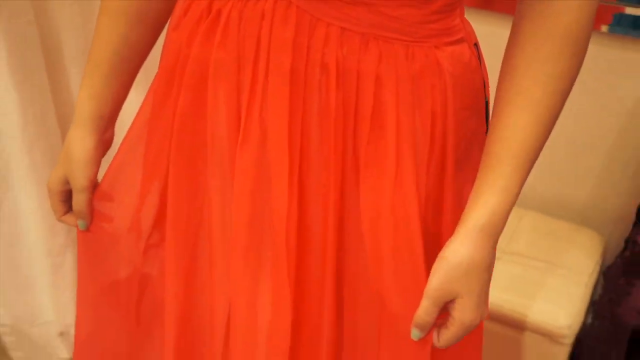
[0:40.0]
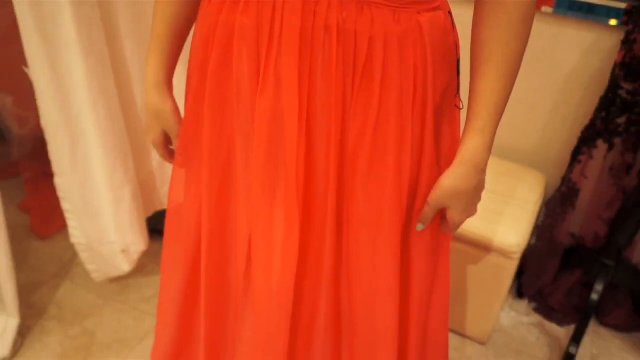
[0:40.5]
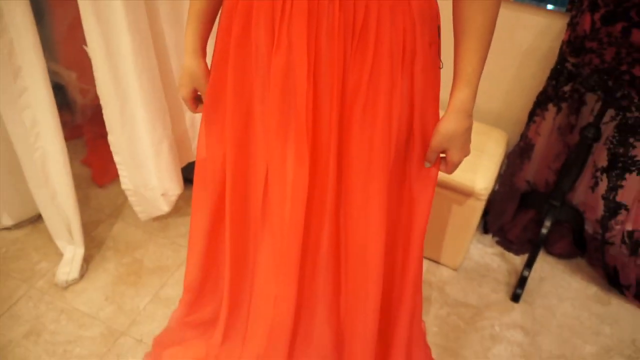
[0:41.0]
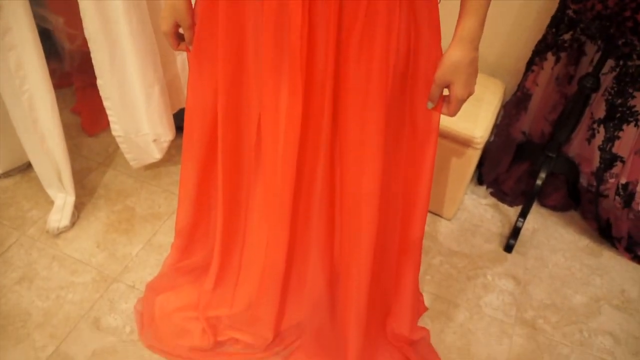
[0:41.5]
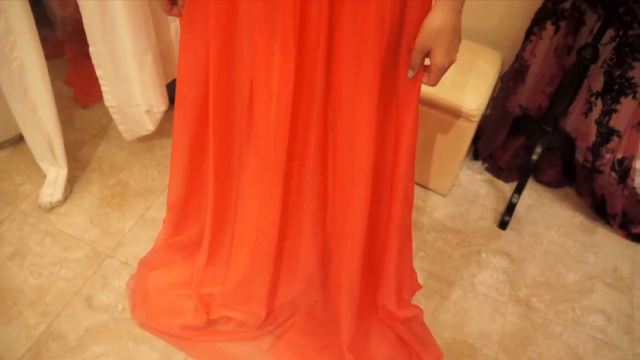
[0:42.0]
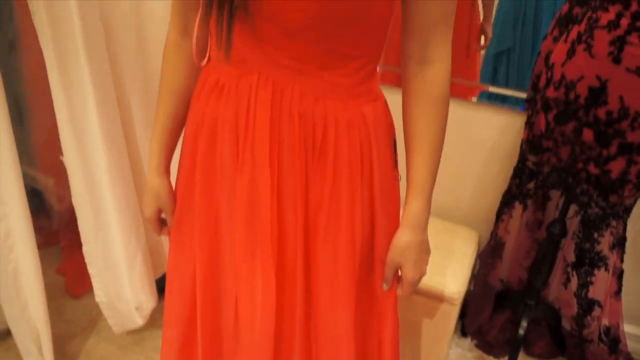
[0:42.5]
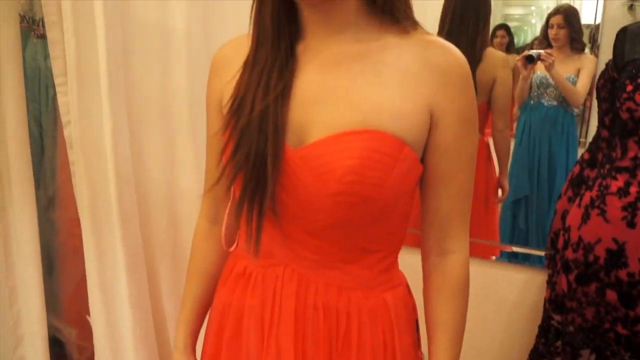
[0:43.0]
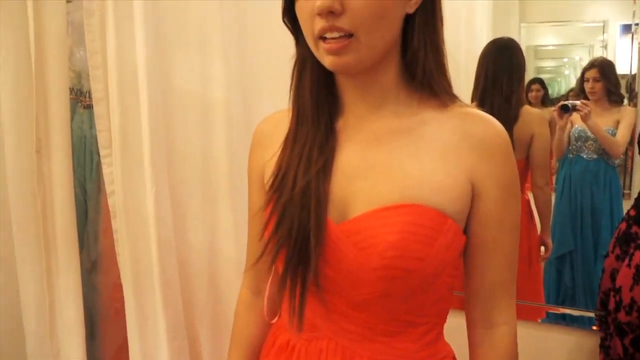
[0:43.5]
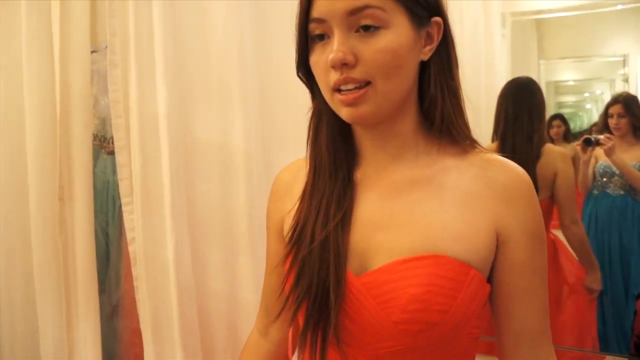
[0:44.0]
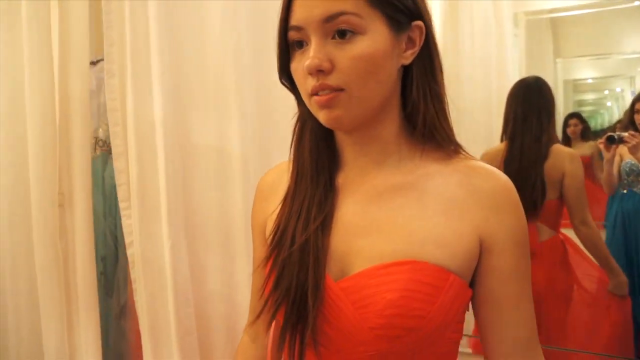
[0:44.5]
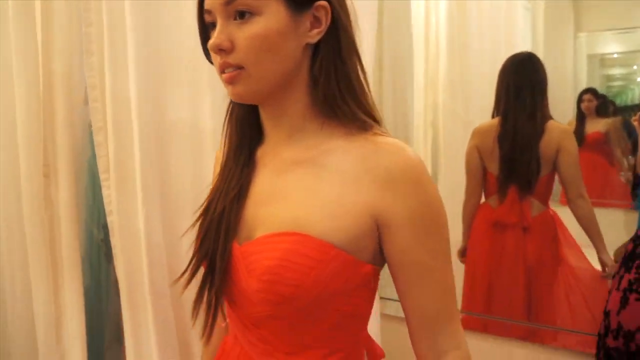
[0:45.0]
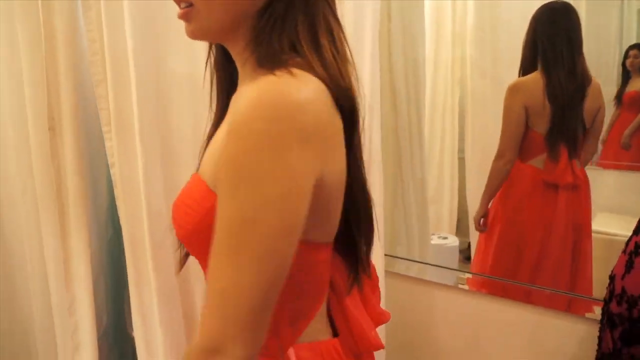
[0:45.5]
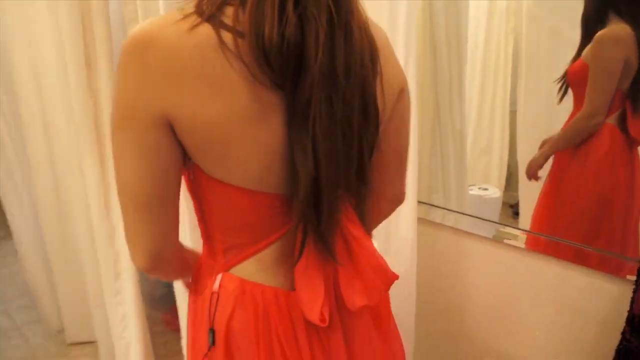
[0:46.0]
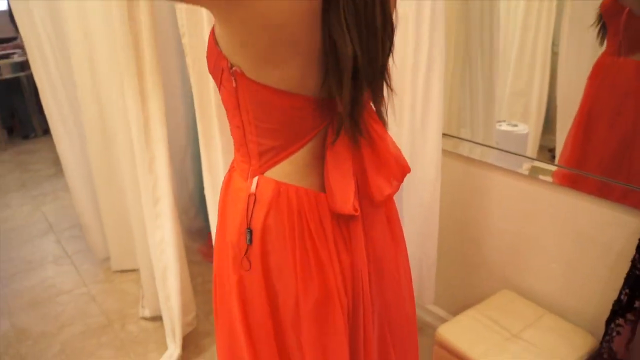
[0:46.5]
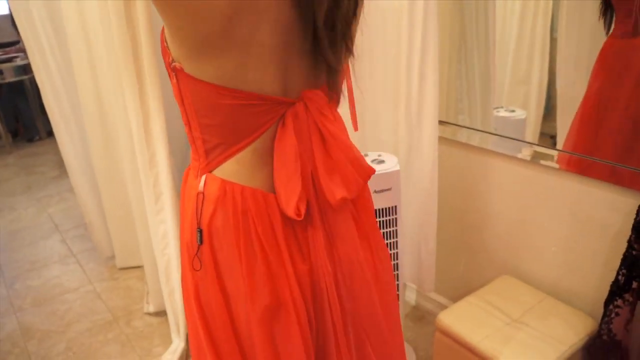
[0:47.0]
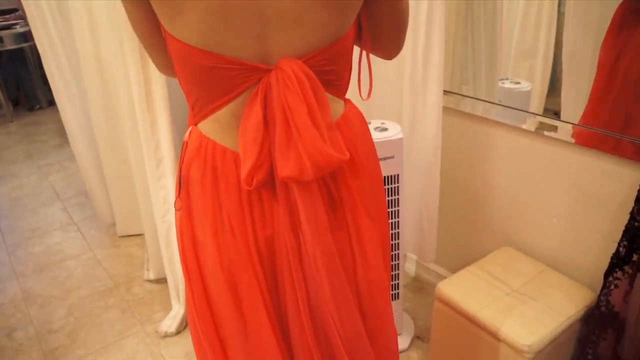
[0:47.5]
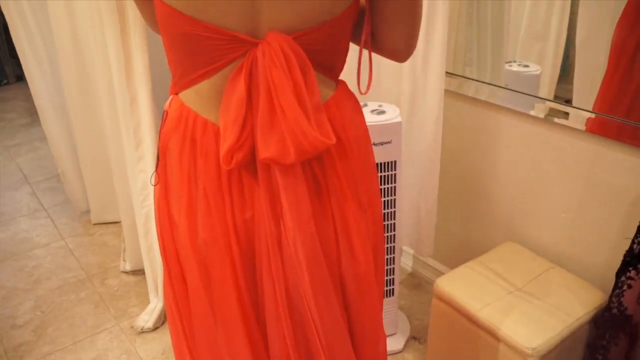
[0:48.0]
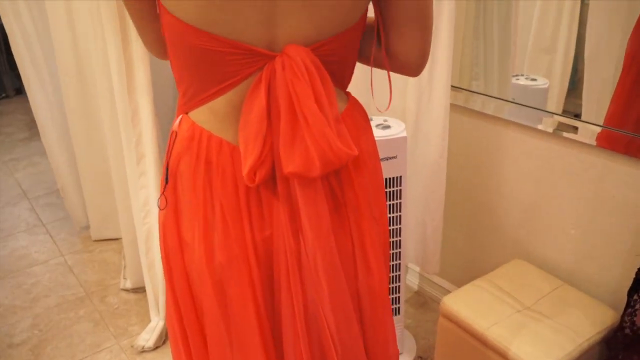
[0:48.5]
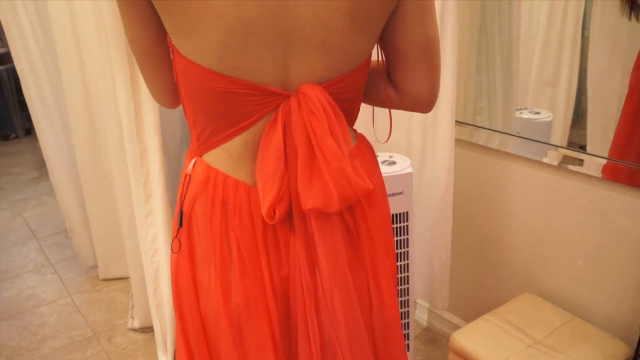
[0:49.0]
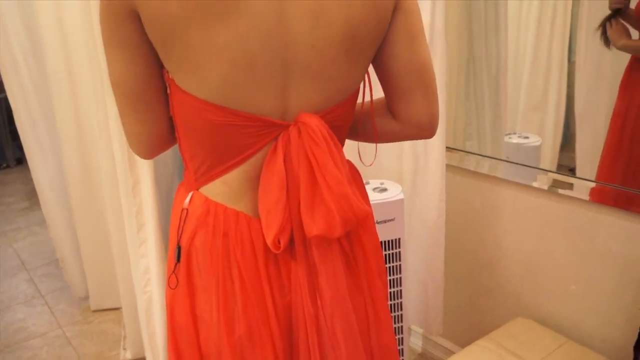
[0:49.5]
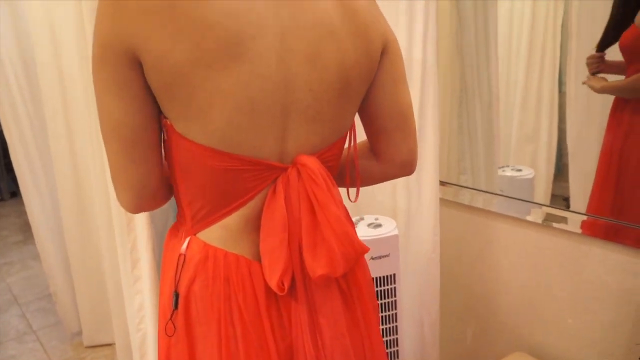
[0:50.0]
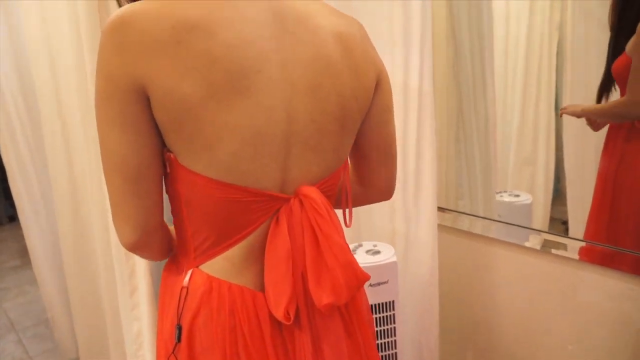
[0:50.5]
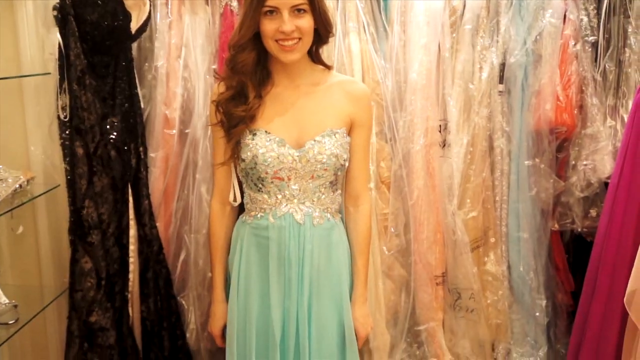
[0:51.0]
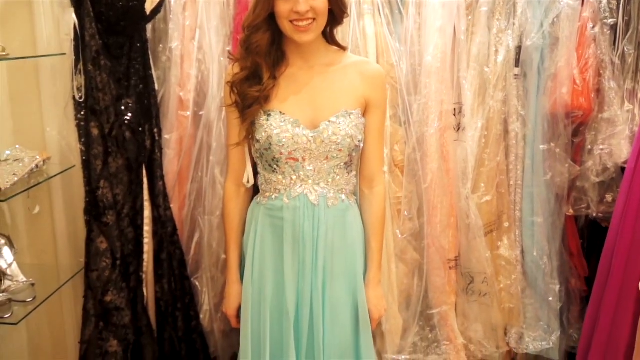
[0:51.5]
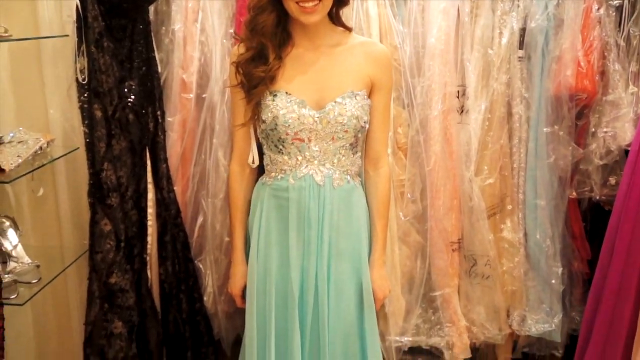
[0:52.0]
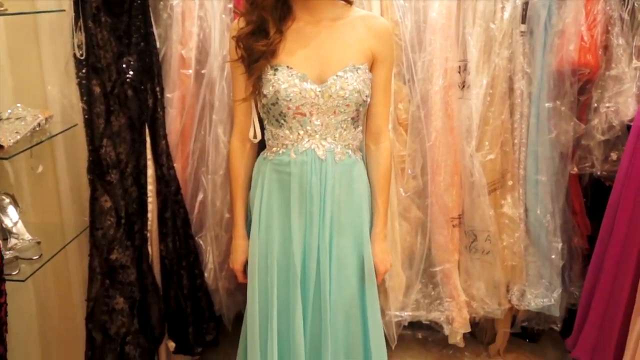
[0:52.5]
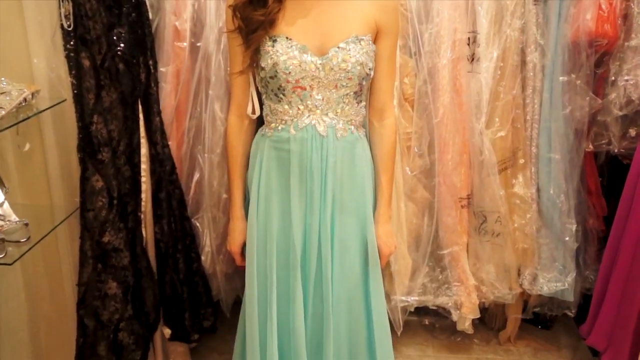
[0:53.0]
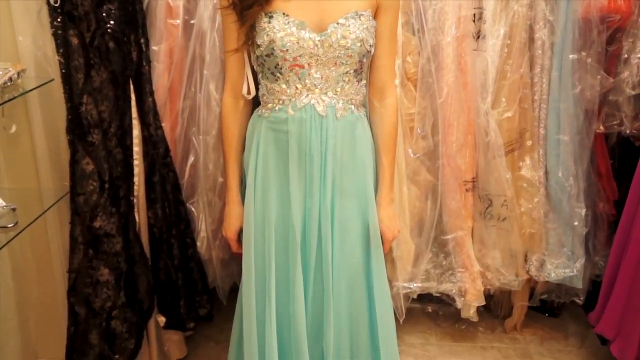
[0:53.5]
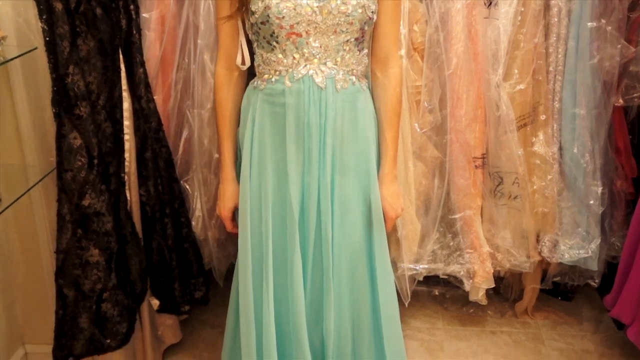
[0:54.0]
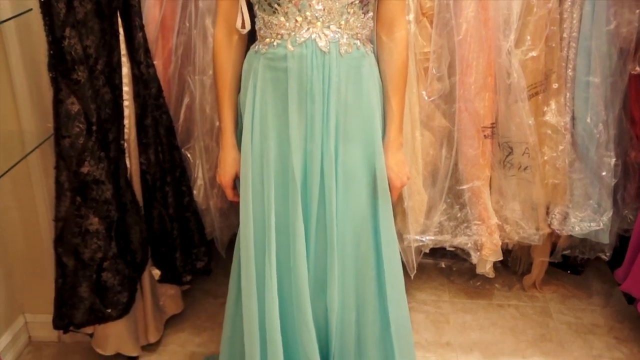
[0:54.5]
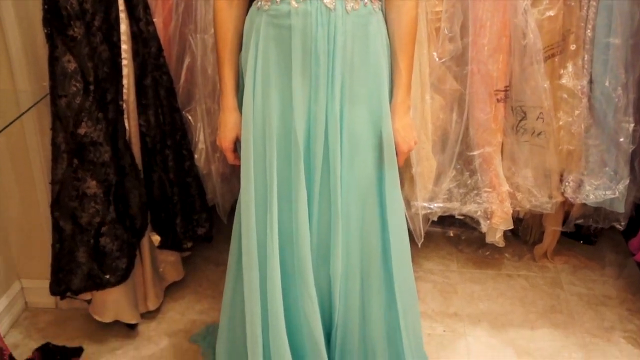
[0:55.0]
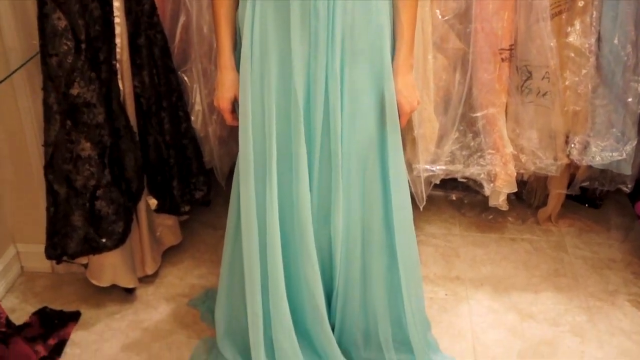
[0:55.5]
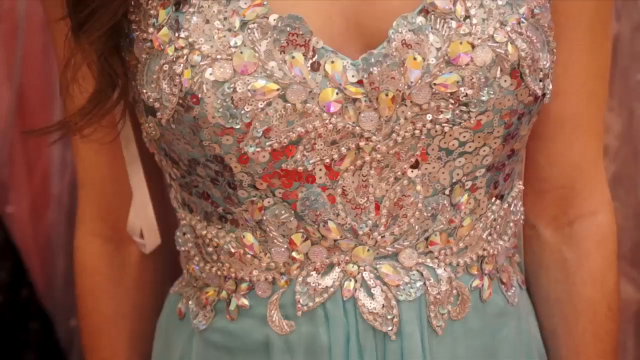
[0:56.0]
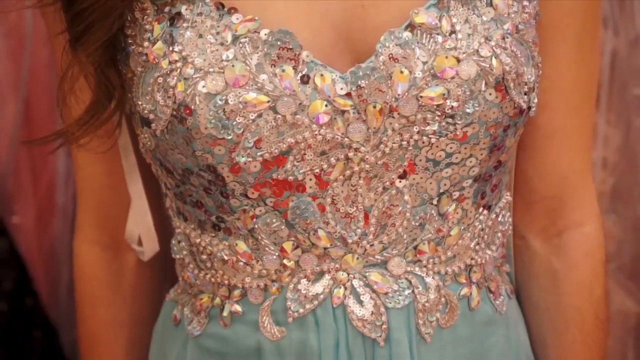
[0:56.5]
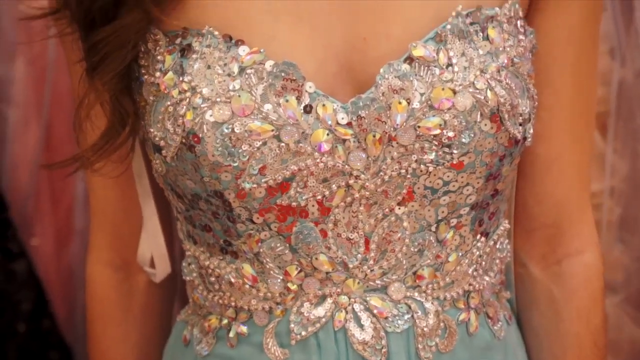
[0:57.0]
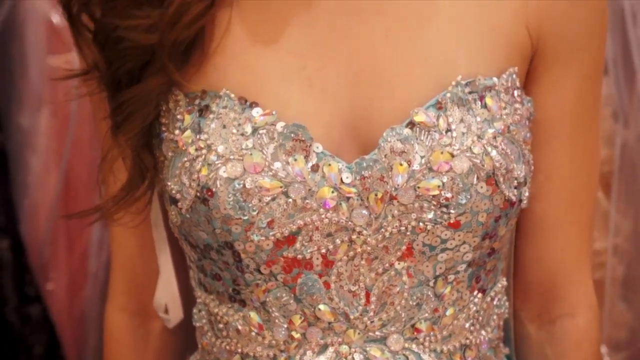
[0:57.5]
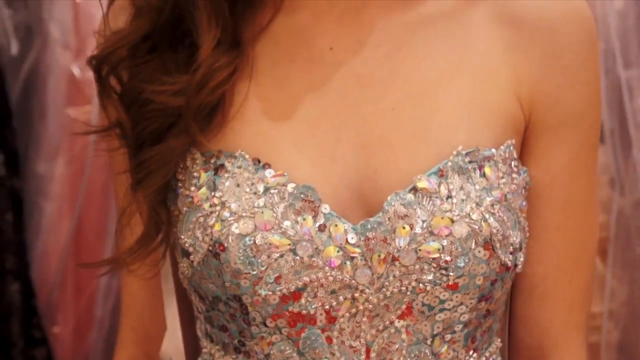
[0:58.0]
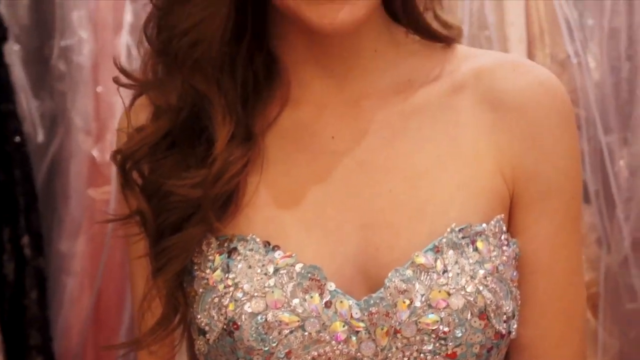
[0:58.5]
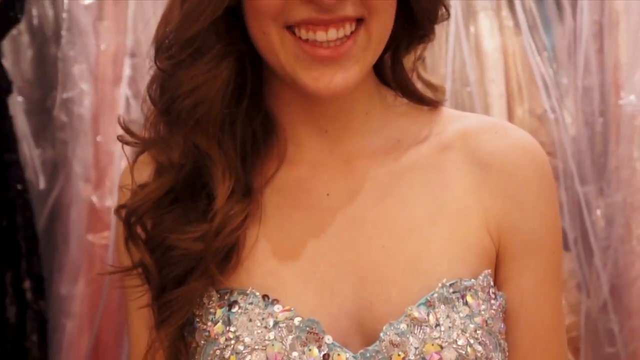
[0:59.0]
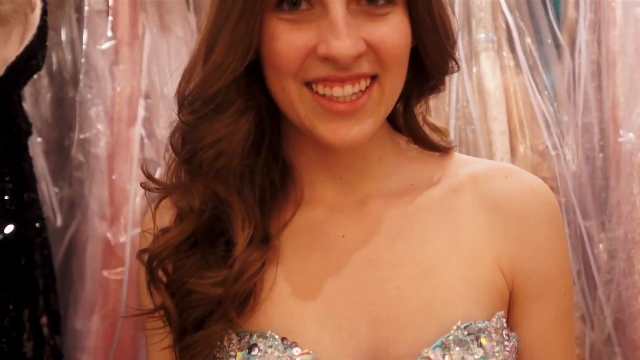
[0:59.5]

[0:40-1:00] The lady in the orange dress, who has brownish hair, looks at the dress in the mirror as the camera pans away a little. The curtains are a tan-white color. The dress is backless. The lady wearing the blue dress is shown, with jewelry-like sequins from the waist to the breast area. A black dress is to the left, and other dresses in plastic protective bags are behind her, with a bit of a glass shelf on the left side of the screen. The camera pans down to show the dress, then back up to the lady, who is smiling. There is some yellowish color in the background, and a sit-down stool. From one camera angle the mirror shows the lady in the blue dress taking a picture of the lady in the orange dress.